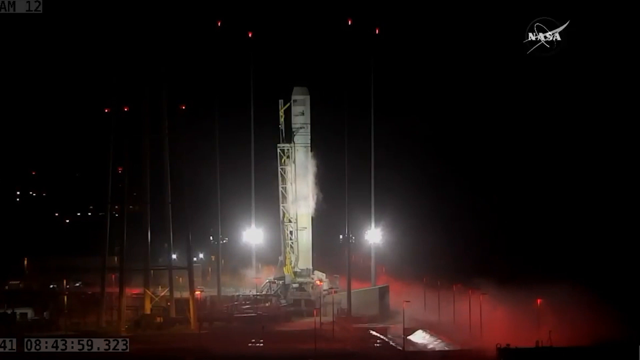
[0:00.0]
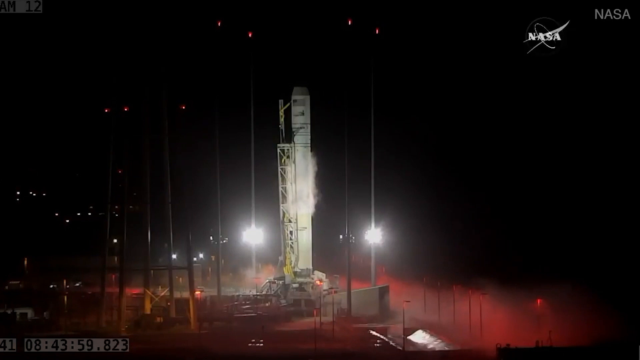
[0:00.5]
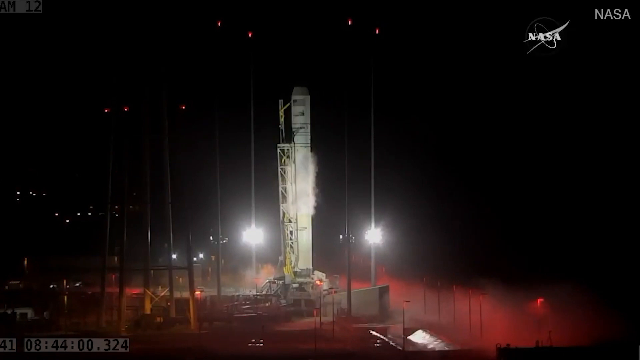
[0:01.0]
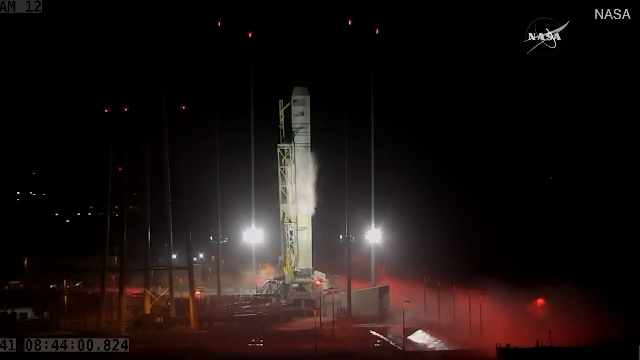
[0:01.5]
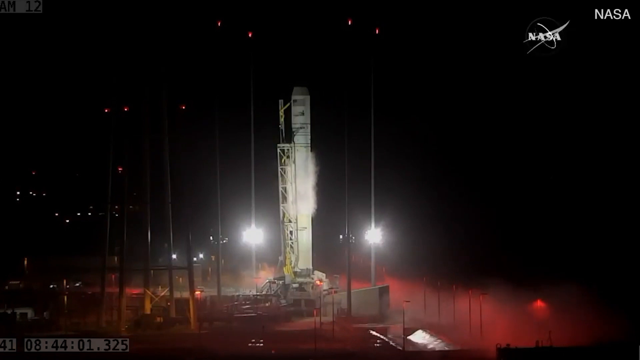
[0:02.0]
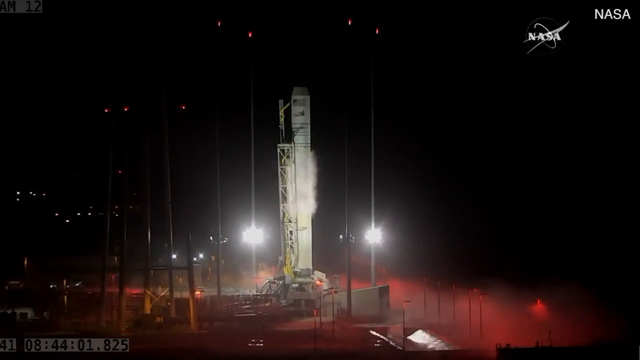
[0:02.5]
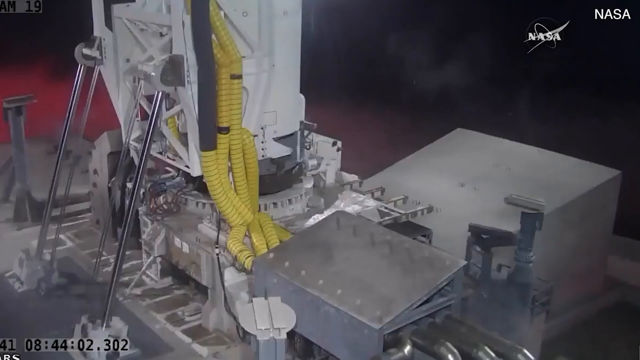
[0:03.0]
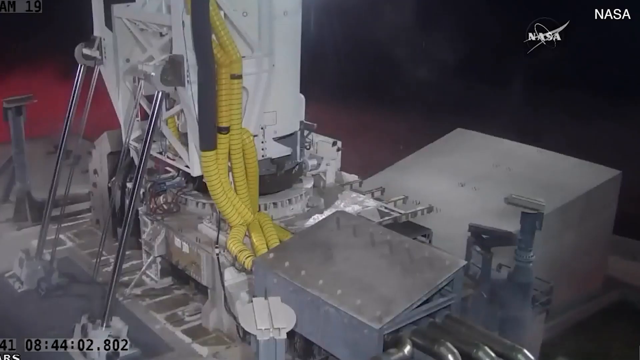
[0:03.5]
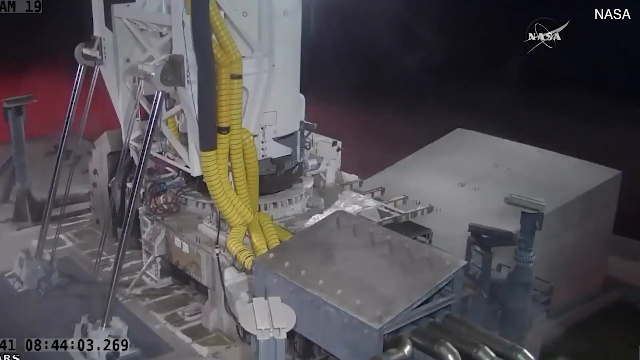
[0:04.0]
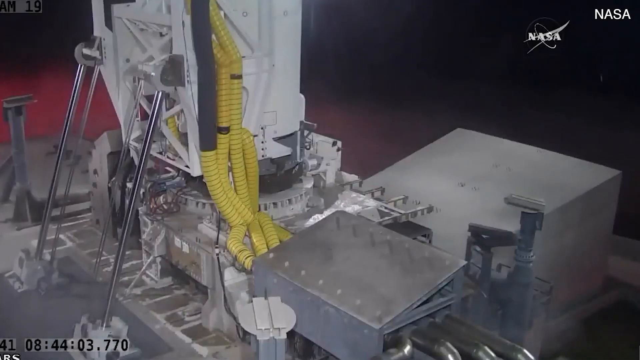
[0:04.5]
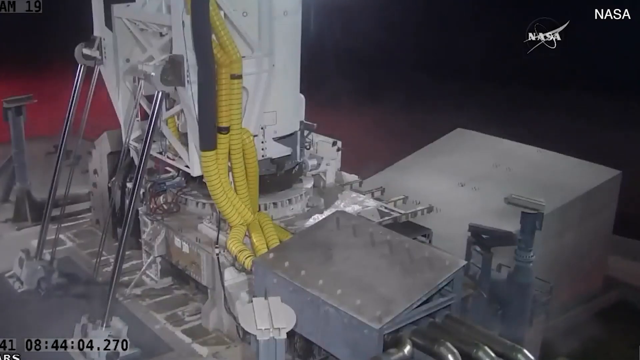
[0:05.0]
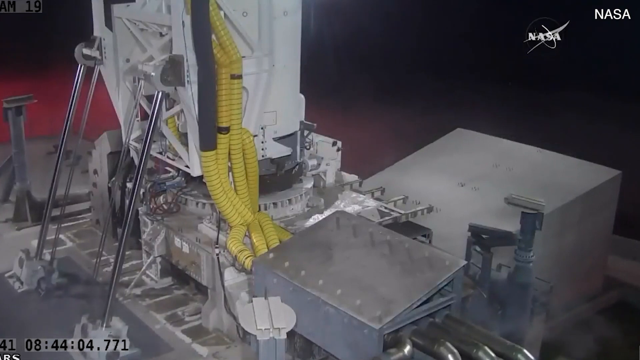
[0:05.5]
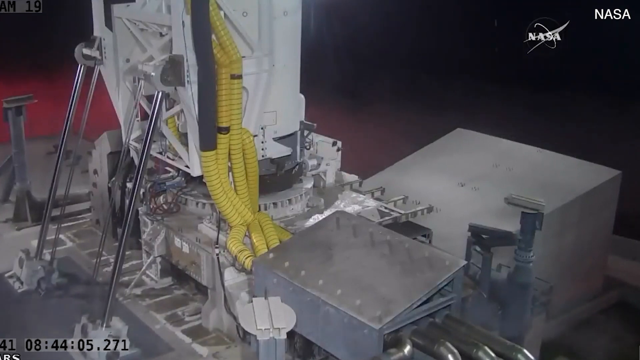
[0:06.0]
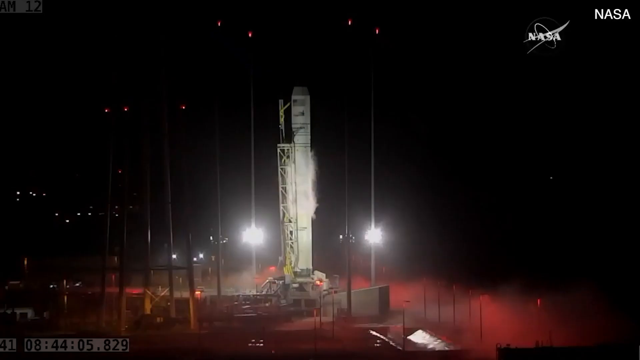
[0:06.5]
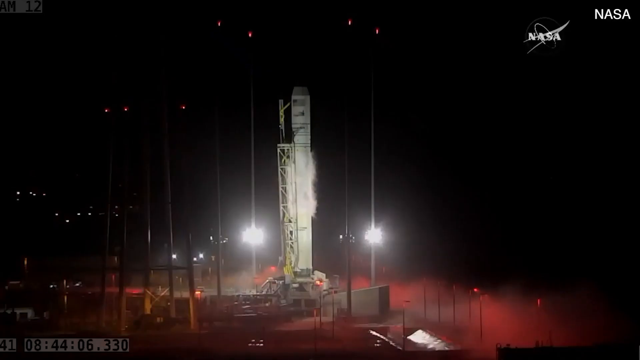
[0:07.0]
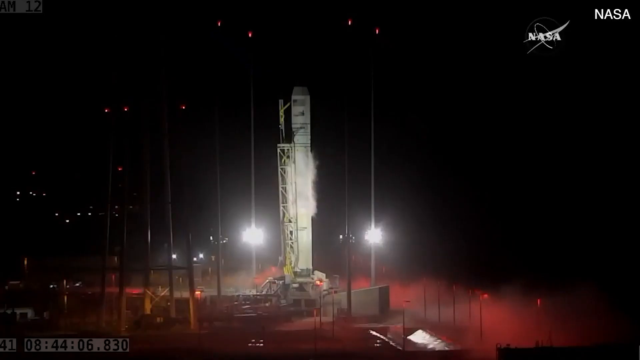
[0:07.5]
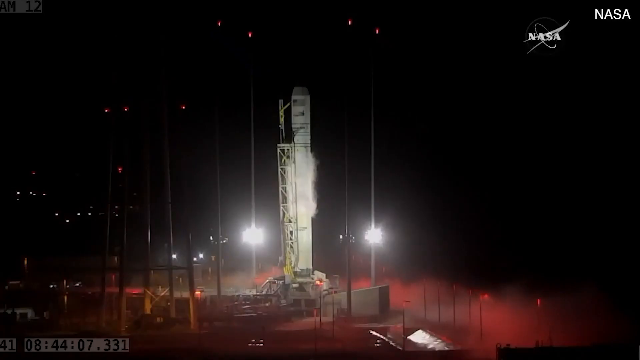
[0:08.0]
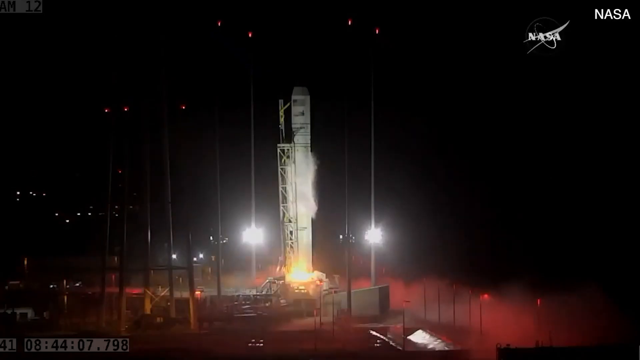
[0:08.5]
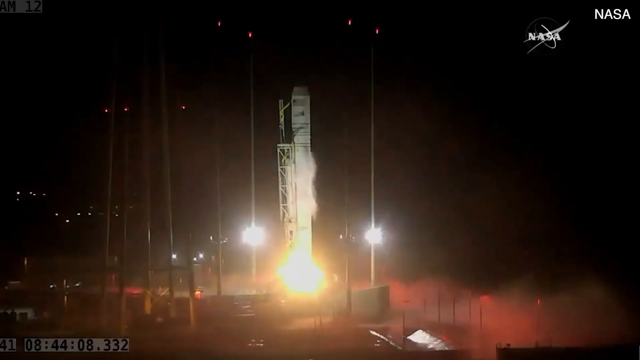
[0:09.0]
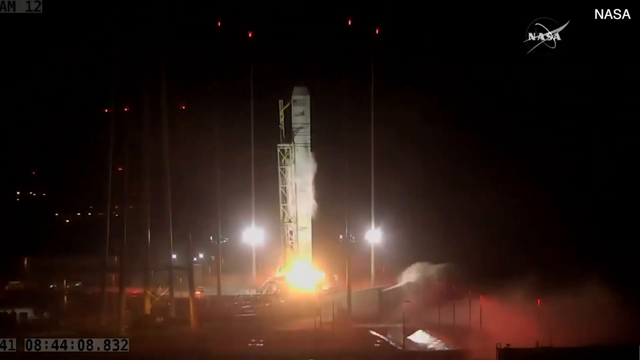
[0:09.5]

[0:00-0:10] A spaceship is visible in the background and appears to be about to launch off a platform. The environment around it is dark.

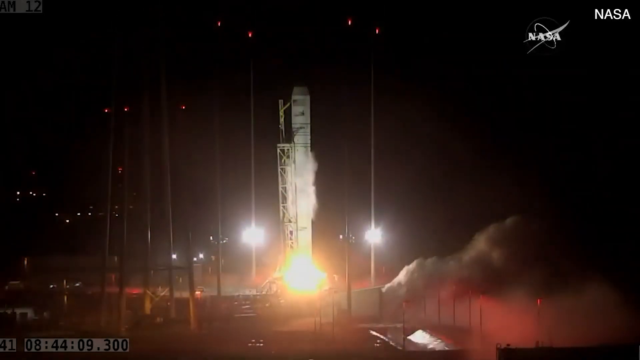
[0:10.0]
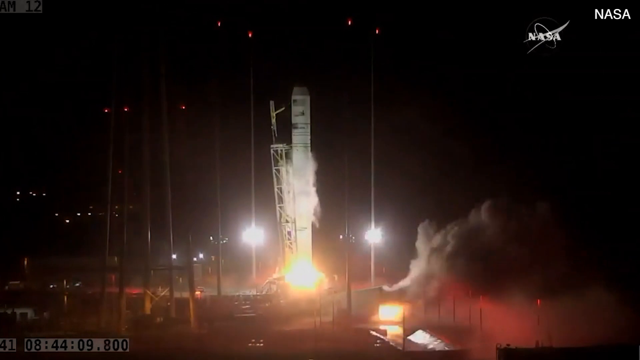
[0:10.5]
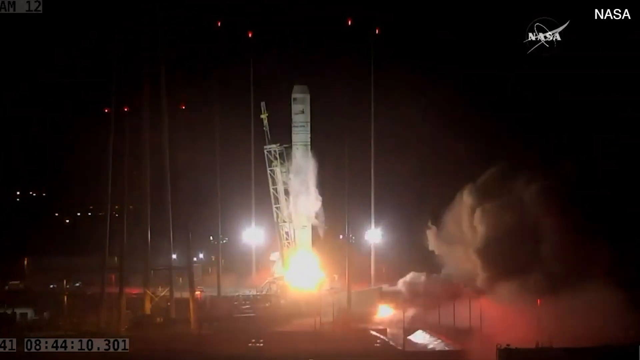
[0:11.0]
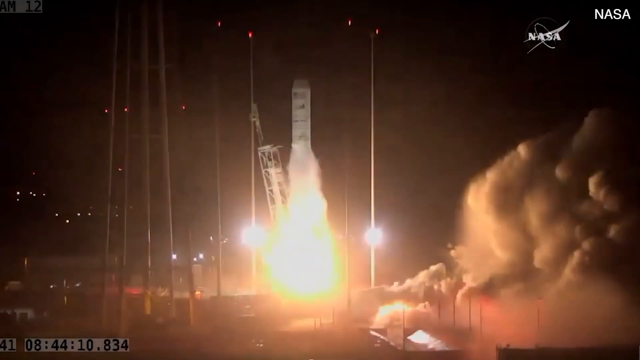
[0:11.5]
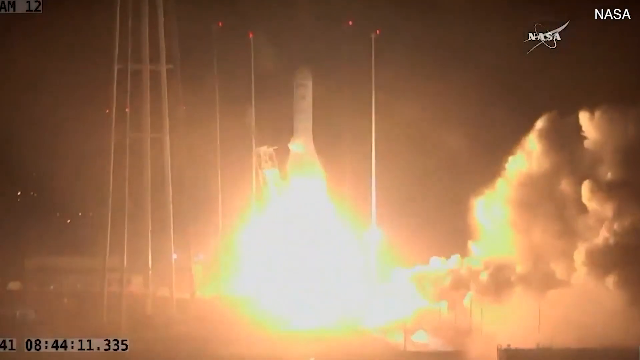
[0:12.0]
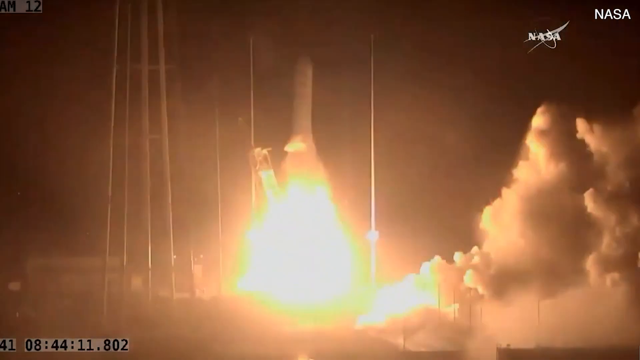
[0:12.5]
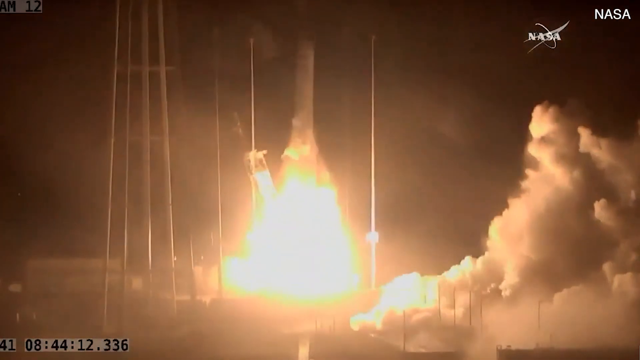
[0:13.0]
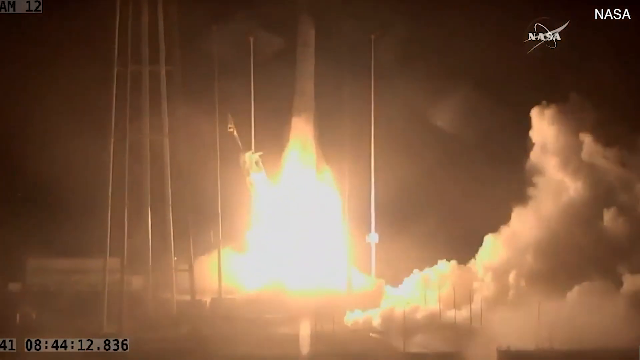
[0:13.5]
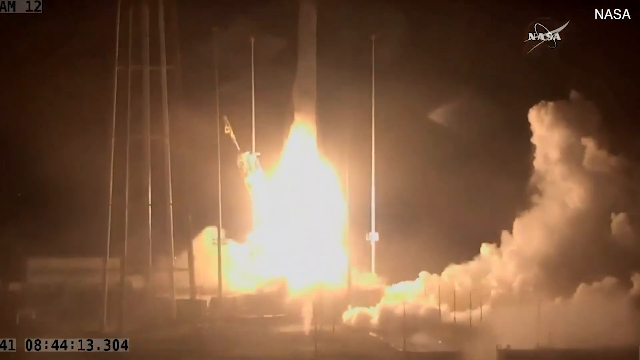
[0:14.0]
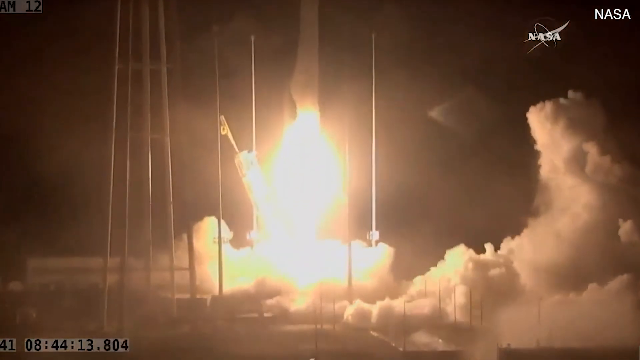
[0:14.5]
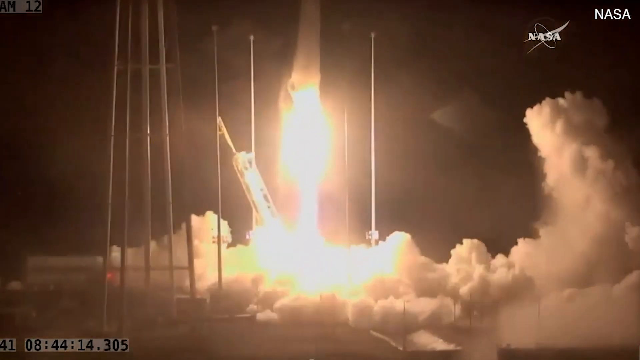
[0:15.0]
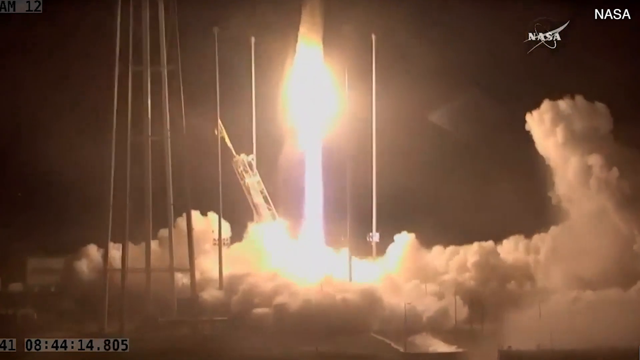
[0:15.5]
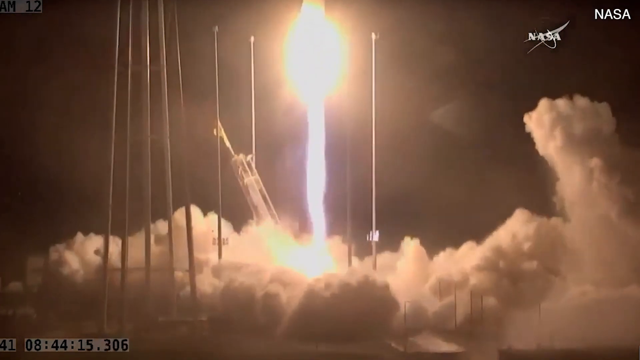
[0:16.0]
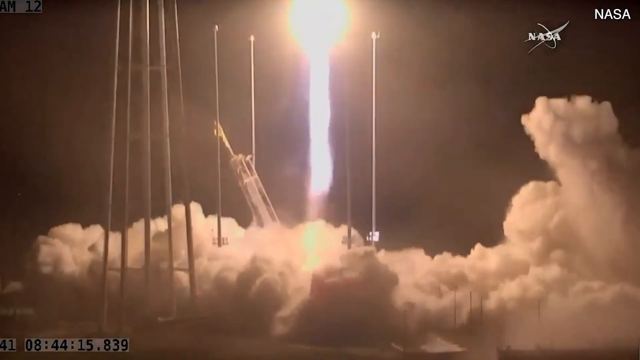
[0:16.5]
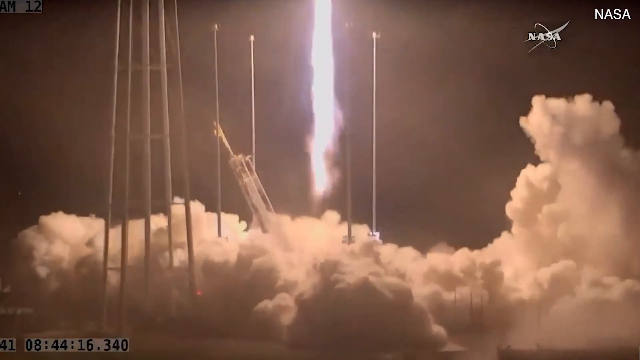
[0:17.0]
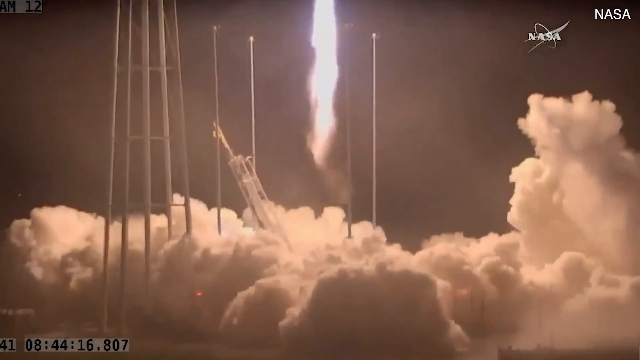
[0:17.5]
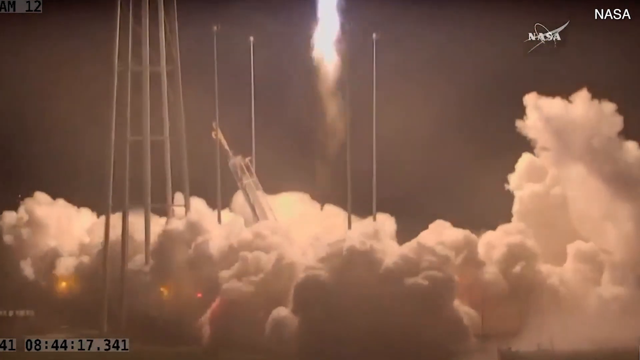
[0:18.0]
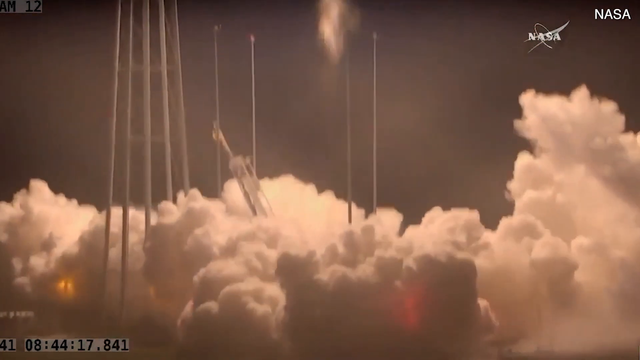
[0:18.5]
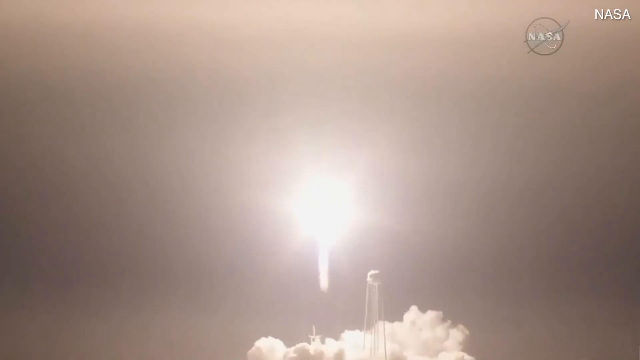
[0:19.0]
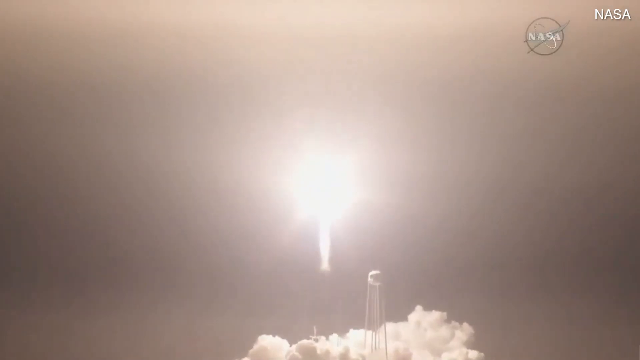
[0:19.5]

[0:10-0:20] Fire appears to be coming out of the bottom of the spaceship, which is marked as being by NASA. As it launches, a lot of fire comes off the other end of the spaceship. The background is completely black, pitch black with night, with a tiny bit of flickering light in the distance.